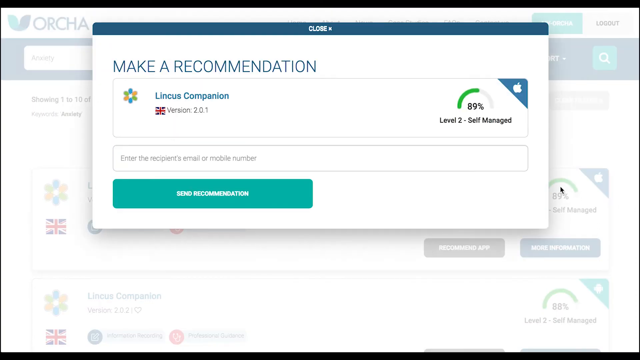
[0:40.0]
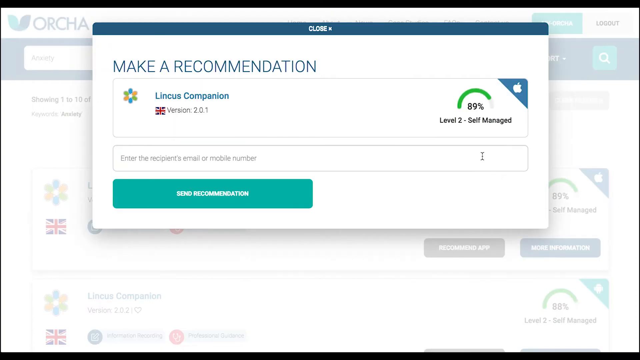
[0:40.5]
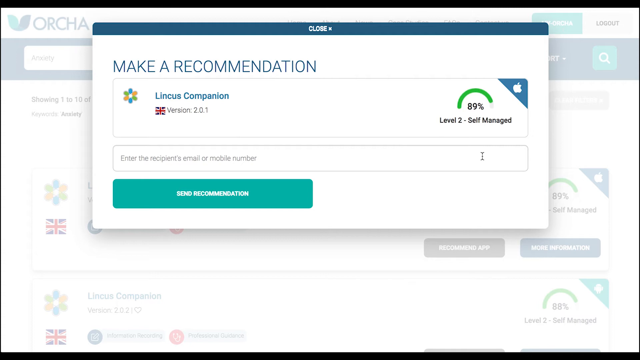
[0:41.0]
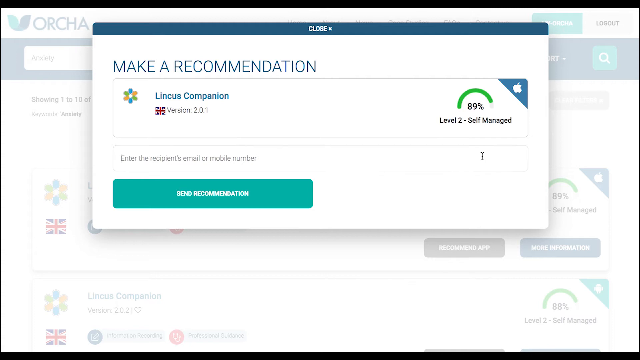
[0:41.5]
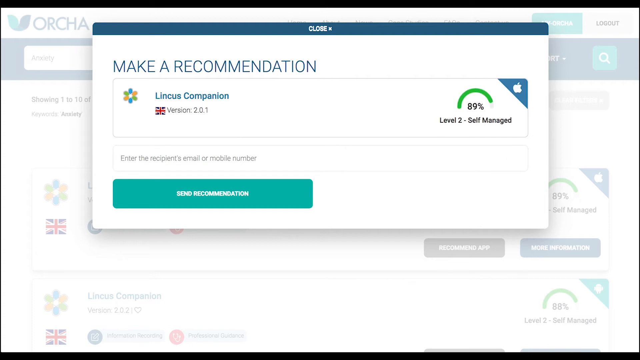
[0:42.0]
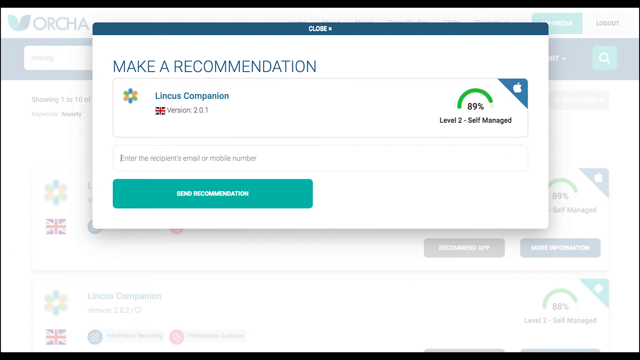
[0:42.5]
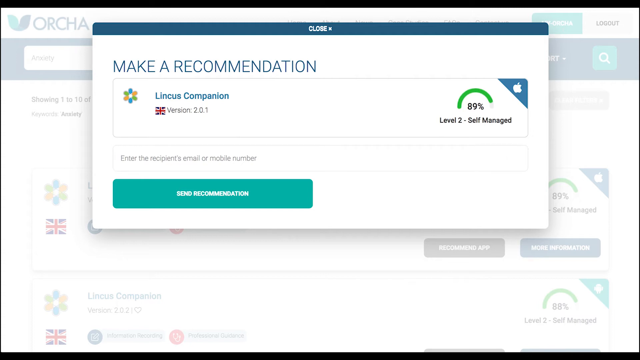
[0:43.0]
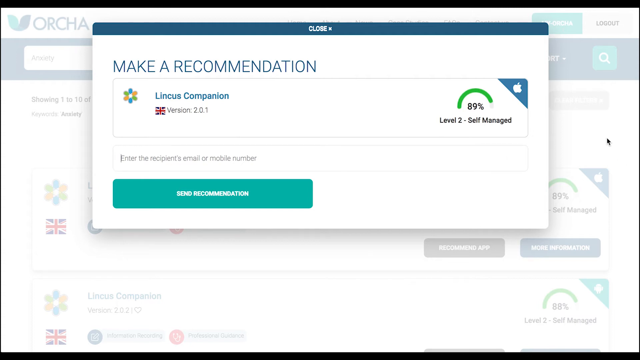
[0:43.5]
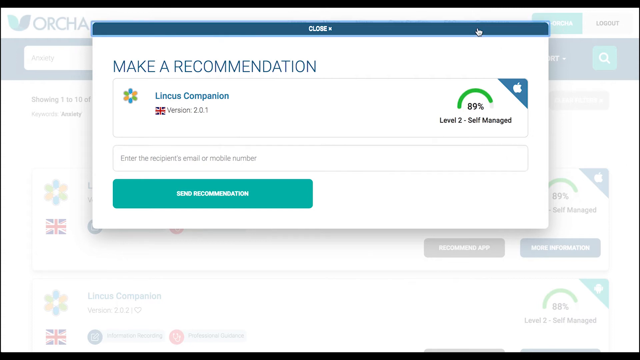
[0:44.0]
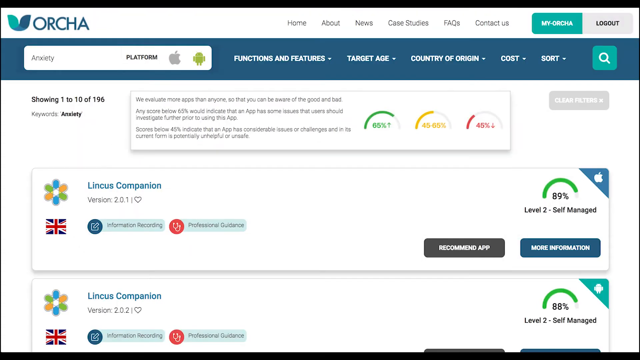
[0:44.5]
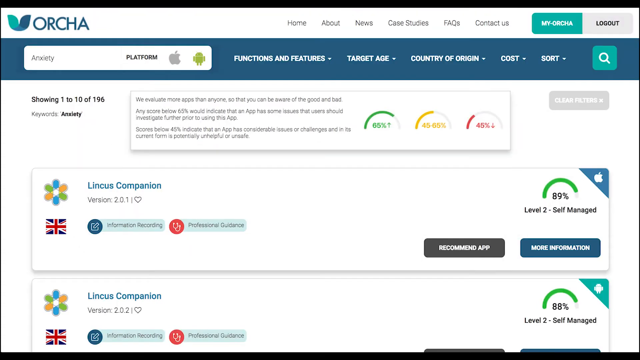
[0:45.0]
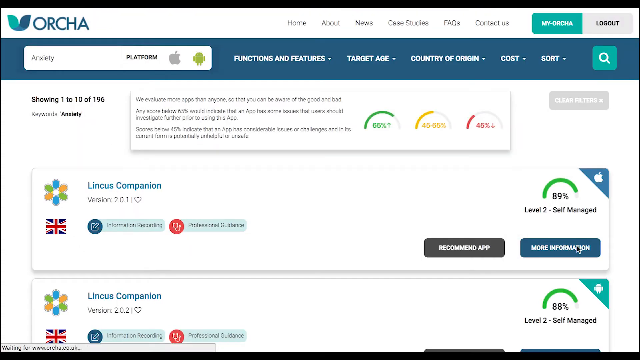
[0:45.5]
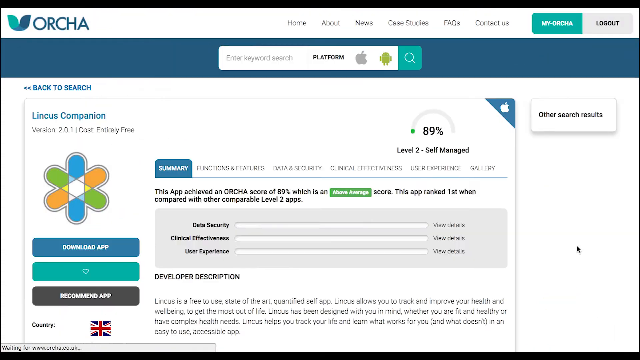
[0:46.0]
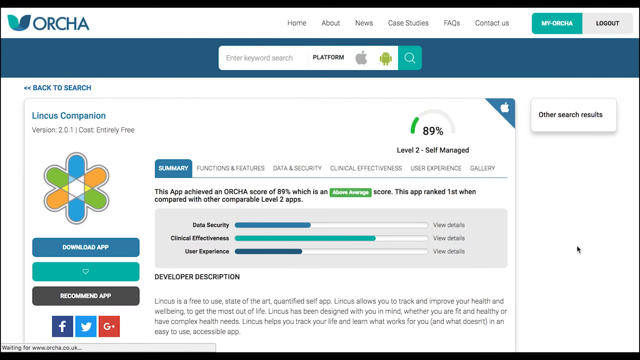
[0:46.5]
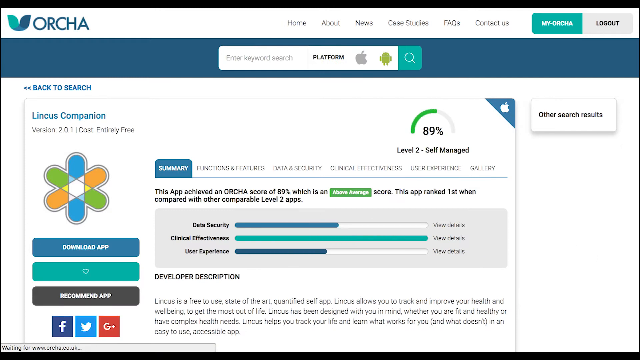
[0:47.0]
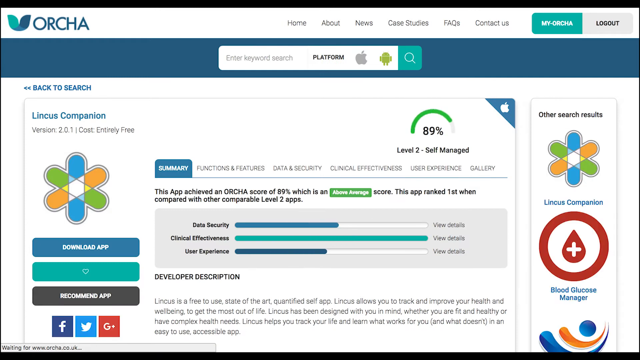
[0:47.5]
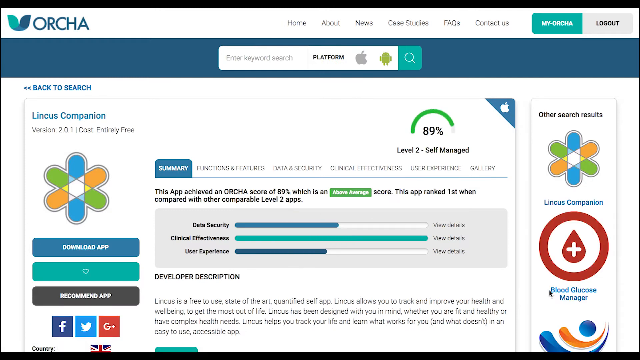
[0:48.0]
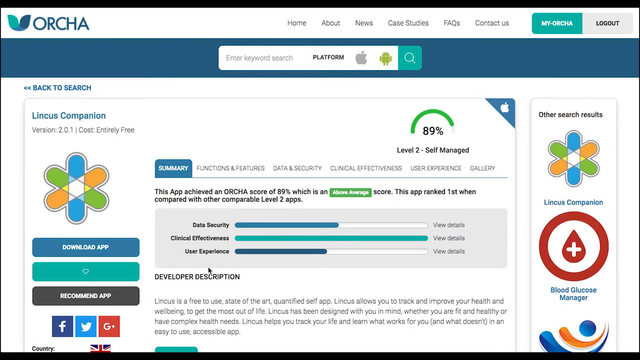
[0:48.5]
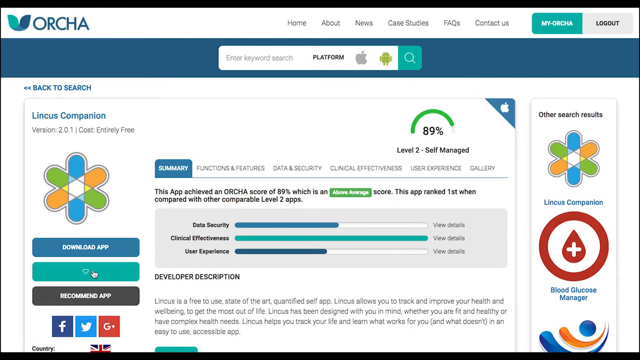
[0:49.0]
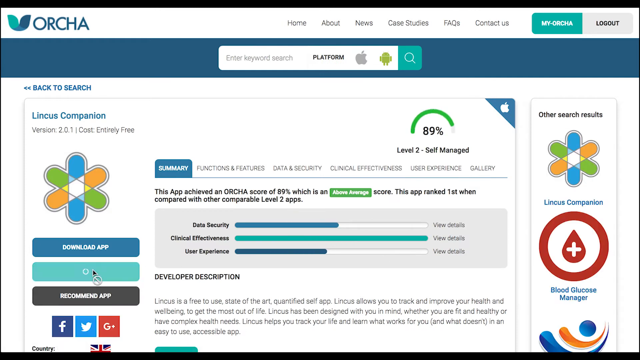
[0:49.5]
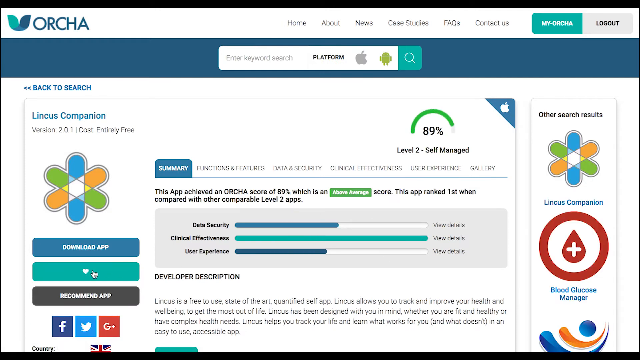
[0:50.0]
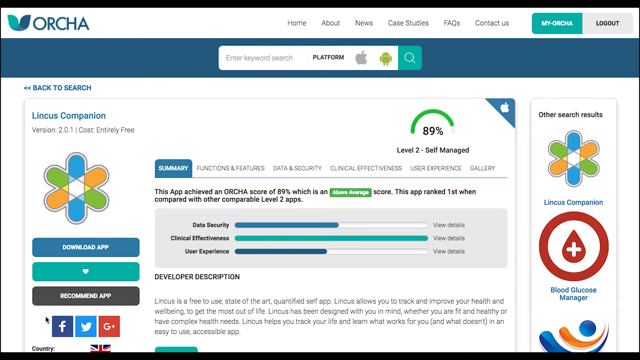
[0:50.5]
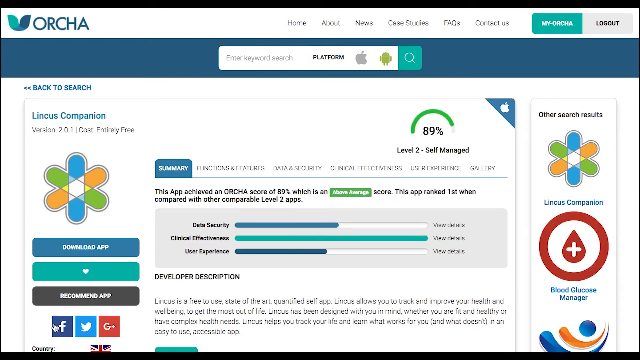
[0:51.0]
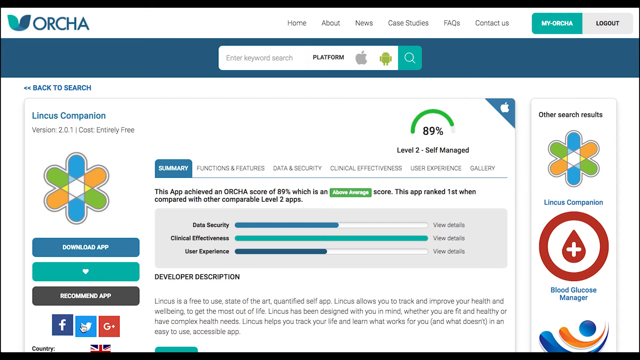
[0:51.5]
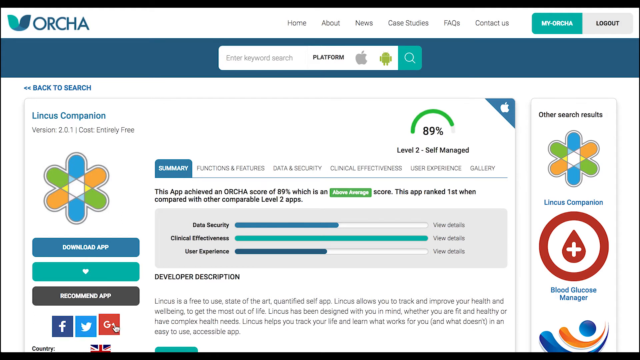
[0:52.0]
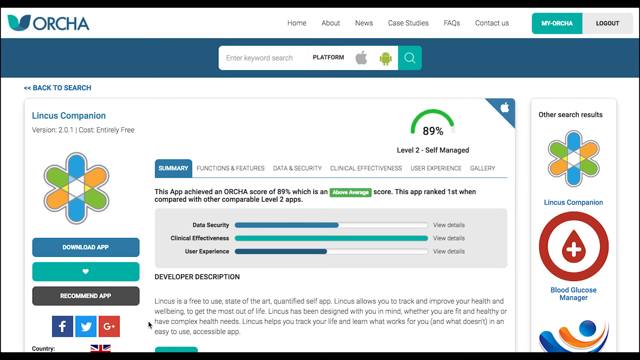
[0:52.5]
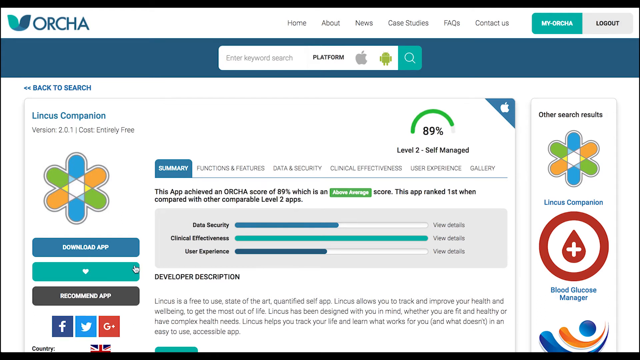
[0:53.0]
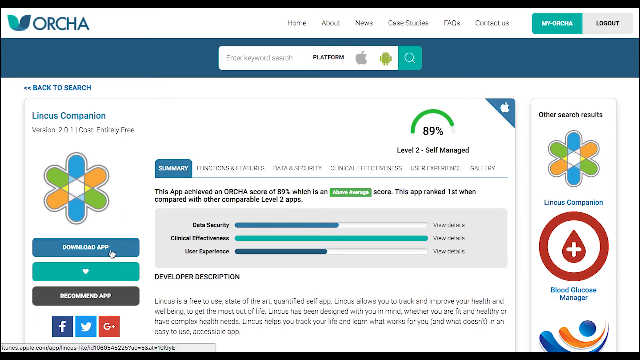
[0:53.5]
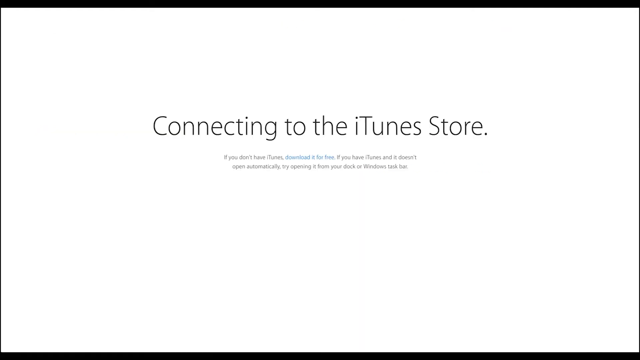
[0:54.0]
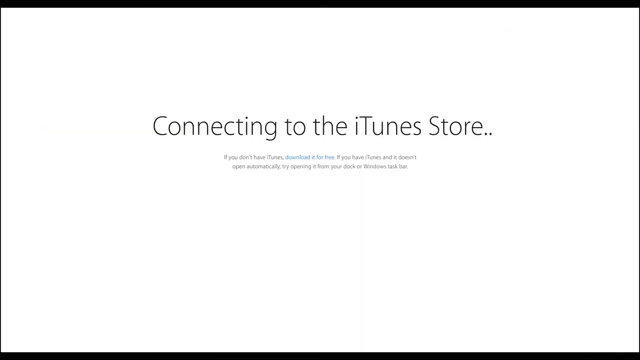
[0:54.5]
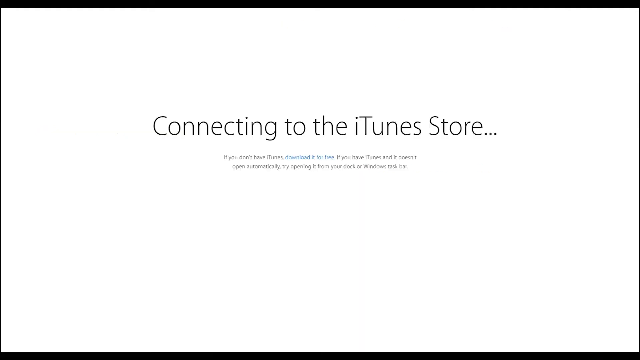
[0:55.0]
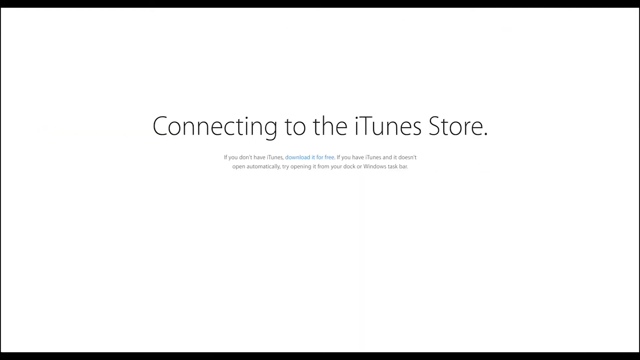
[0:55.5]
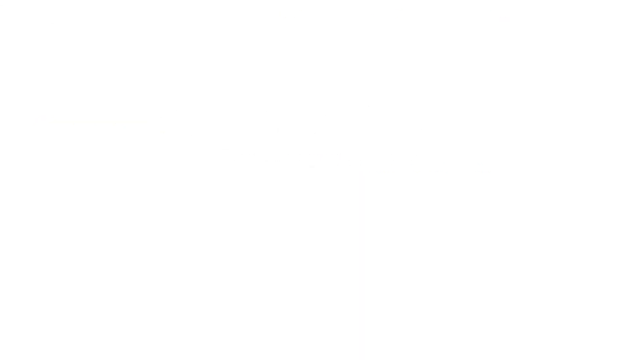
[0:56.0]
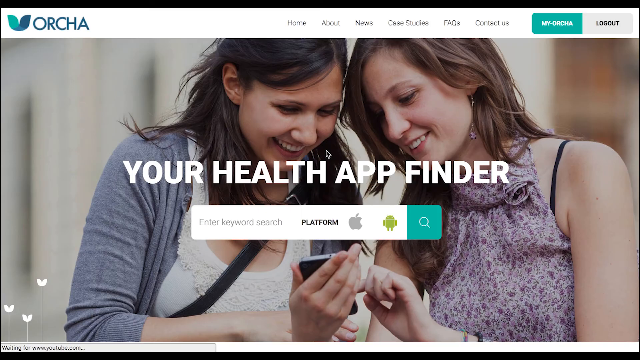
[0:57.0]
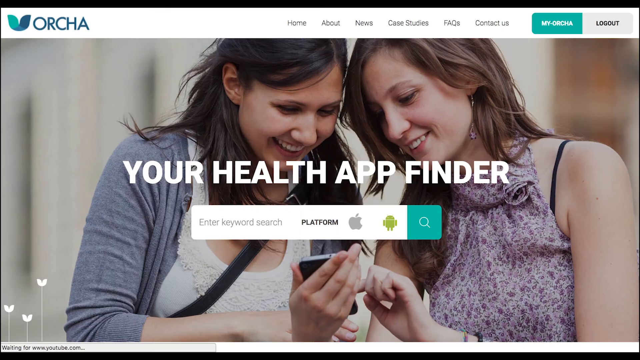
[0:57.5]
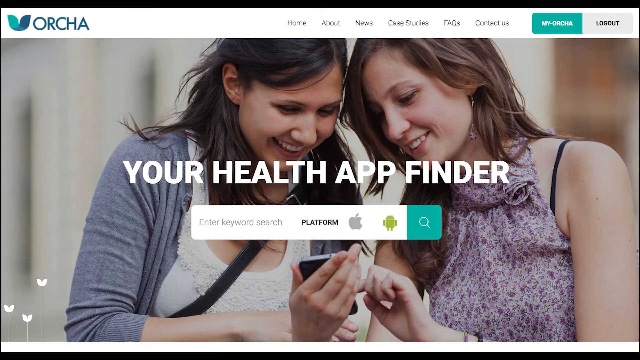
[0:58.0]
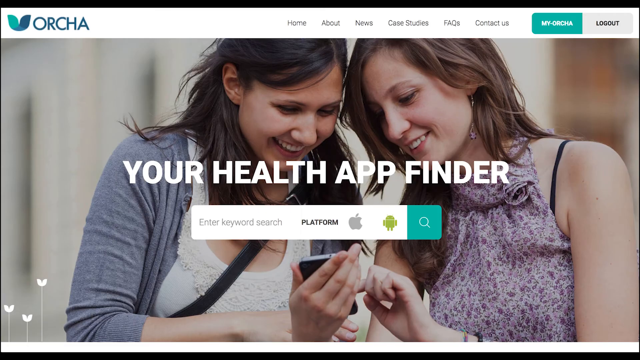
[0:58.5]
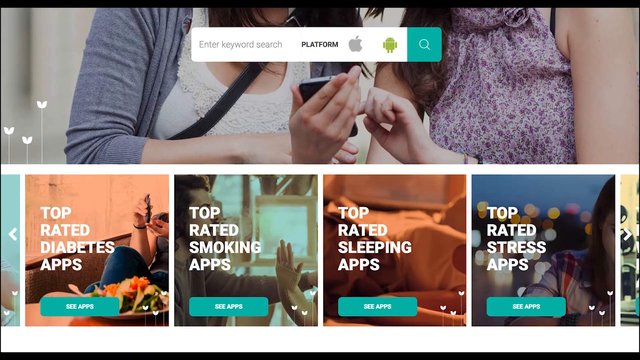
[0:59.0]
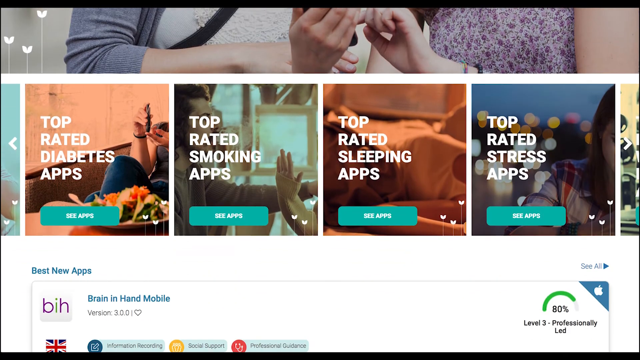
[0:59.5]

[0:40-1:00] The user keeps flicking between pages and selects a love heart on the Lincus Companion app. They then click the download app button, which brings up a page reading "connecting to the iTunes store. If you don't have iTunes, download it for free. If you have iTunes and it doesn't open automatically, try opening it from your dock or Windows taskbar." Another page then appears reading "your health app finder" in the centre, apparently within the wider Orcha site, and the app appears to be downloading. The user moves very quickly between pages, hovering over options without allowing enough time to read them, and makes multiple filter selections that contradict one another, such as selecting both paid and free.